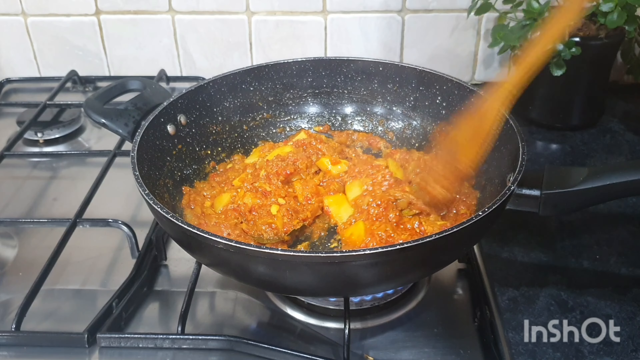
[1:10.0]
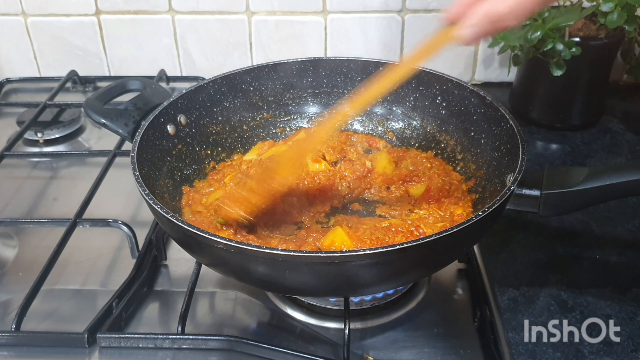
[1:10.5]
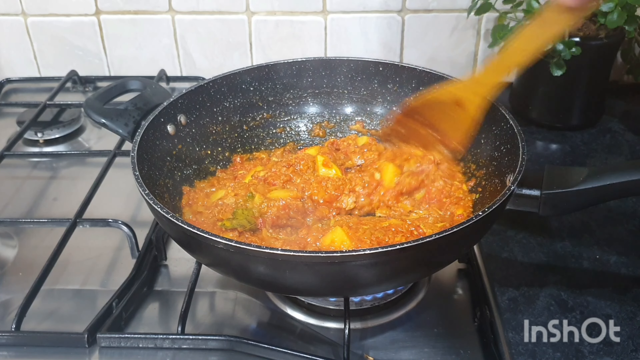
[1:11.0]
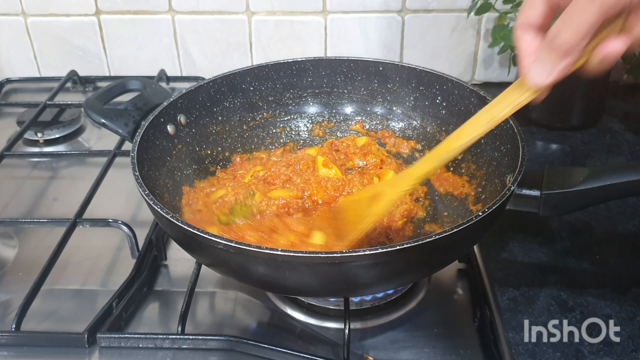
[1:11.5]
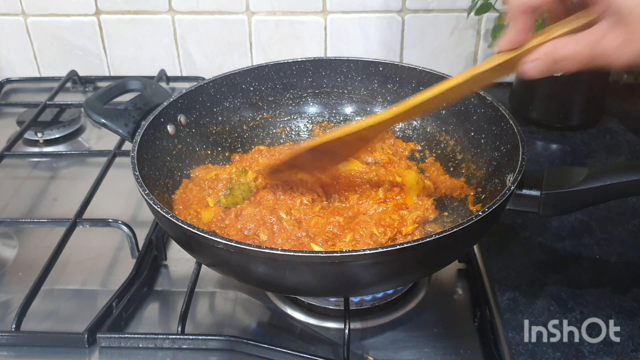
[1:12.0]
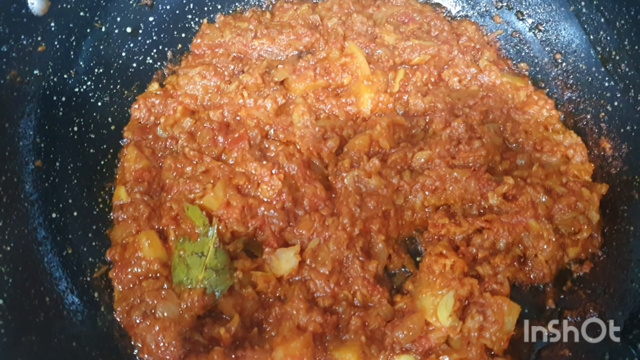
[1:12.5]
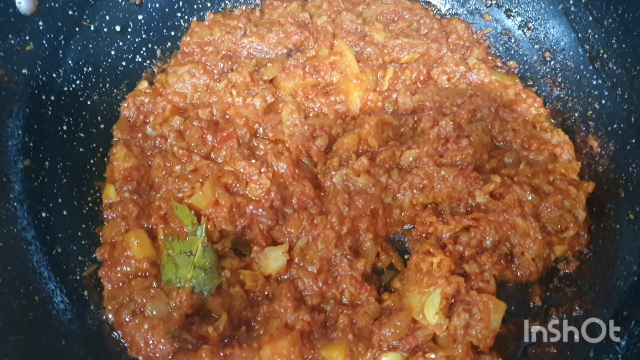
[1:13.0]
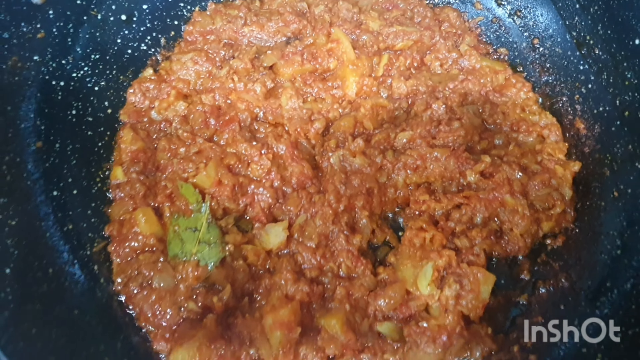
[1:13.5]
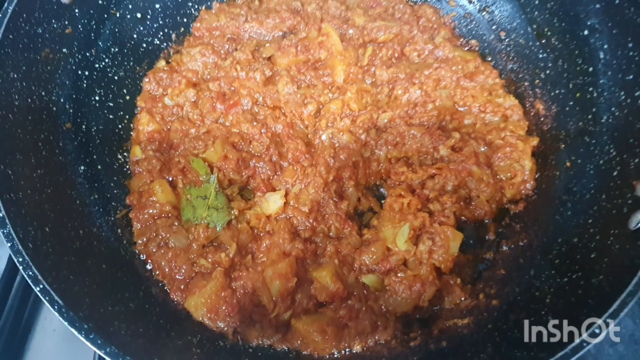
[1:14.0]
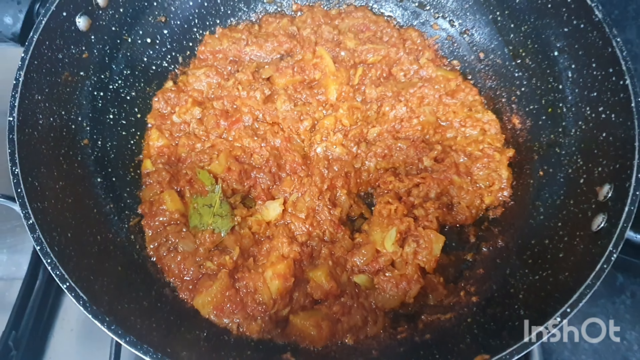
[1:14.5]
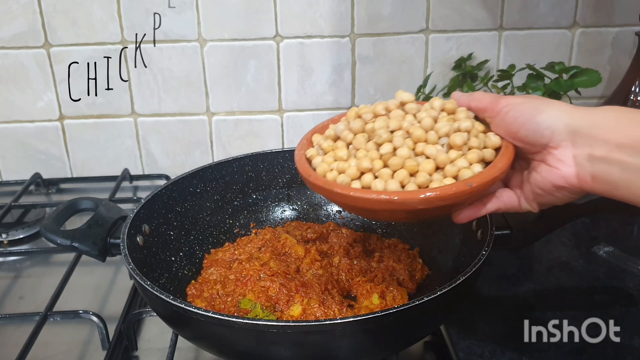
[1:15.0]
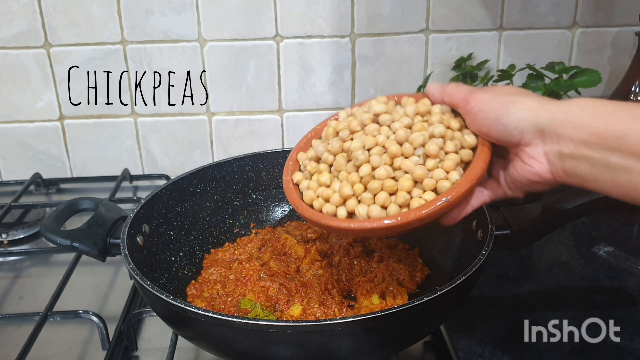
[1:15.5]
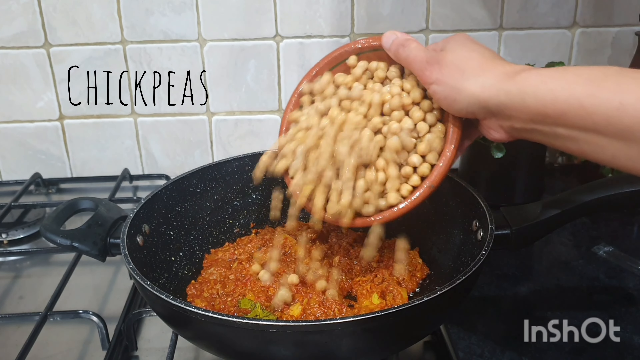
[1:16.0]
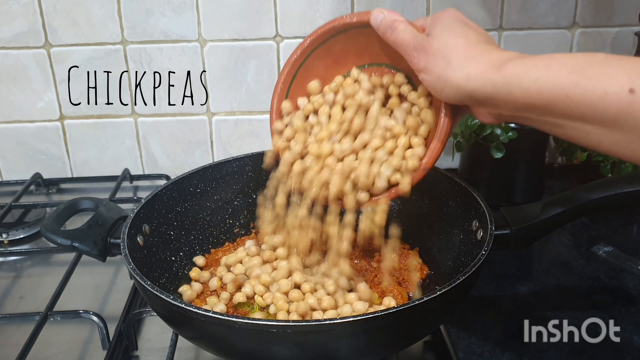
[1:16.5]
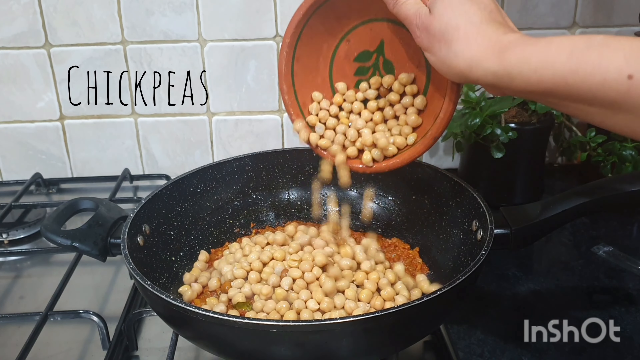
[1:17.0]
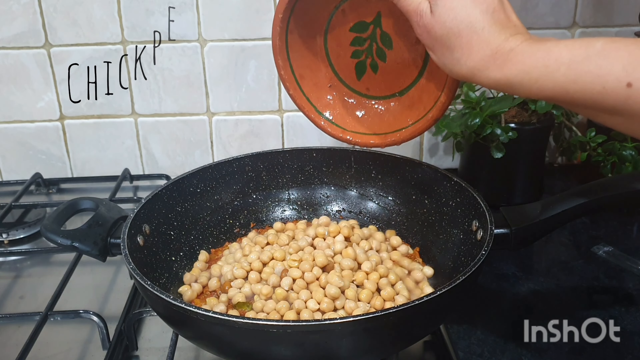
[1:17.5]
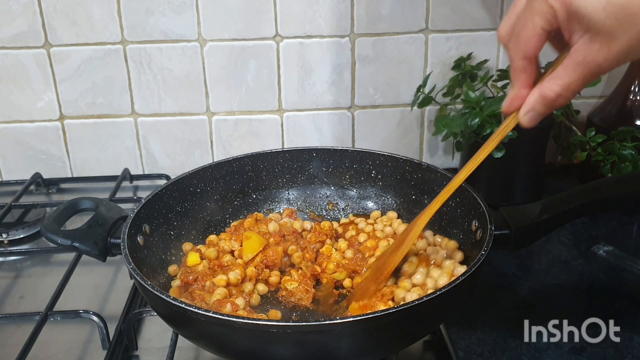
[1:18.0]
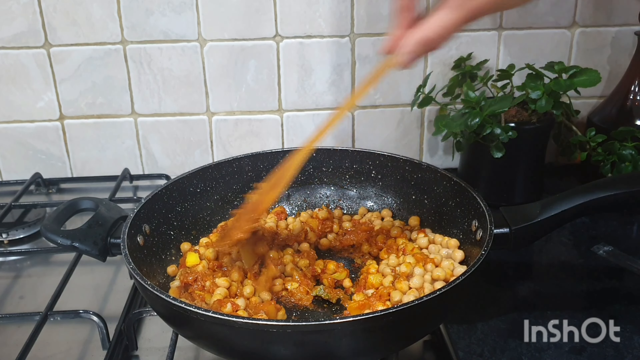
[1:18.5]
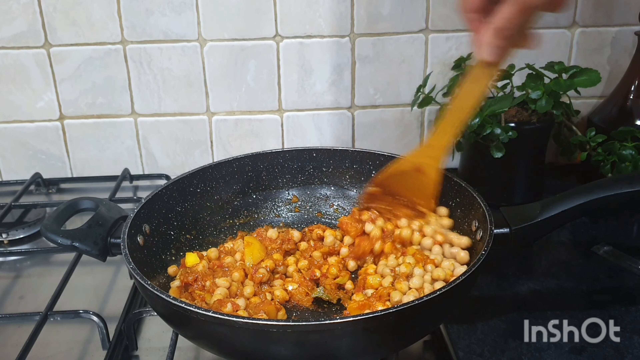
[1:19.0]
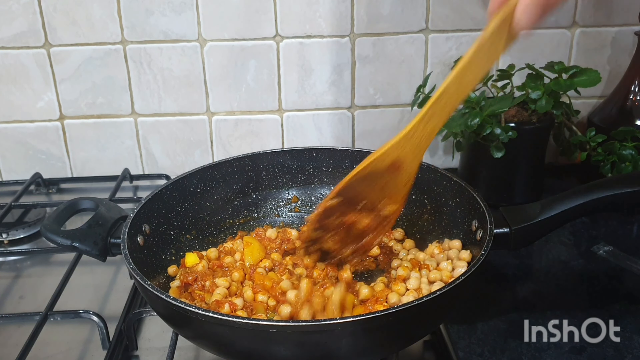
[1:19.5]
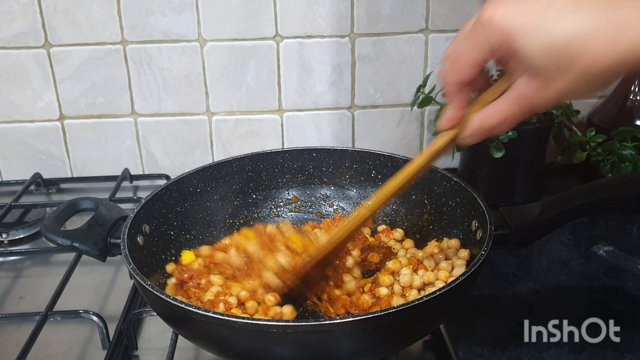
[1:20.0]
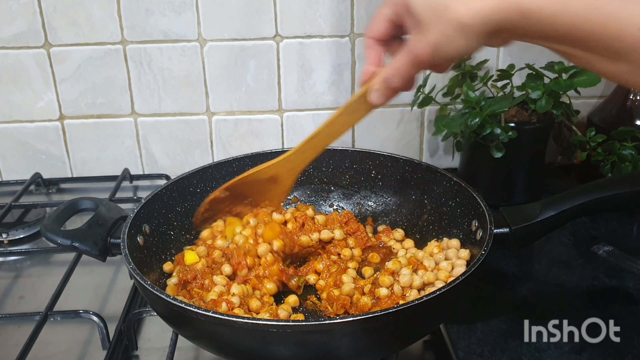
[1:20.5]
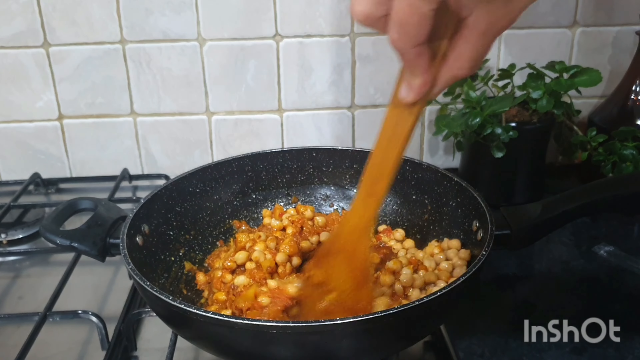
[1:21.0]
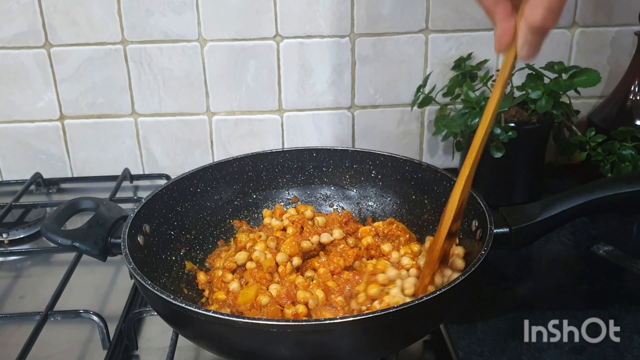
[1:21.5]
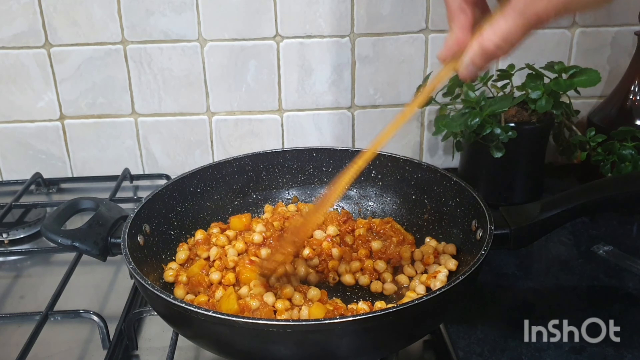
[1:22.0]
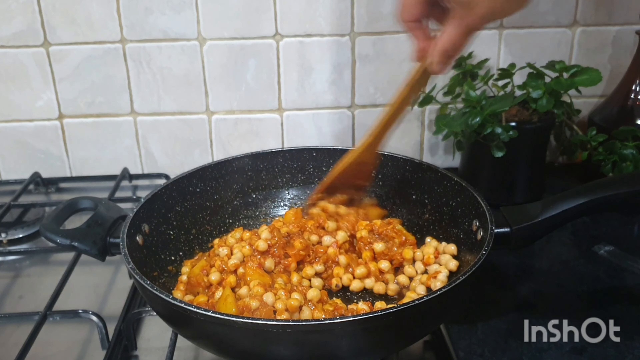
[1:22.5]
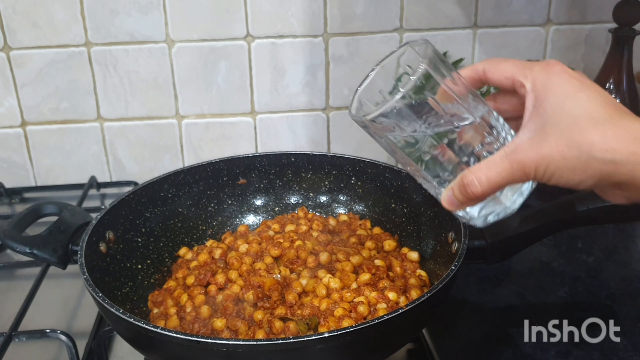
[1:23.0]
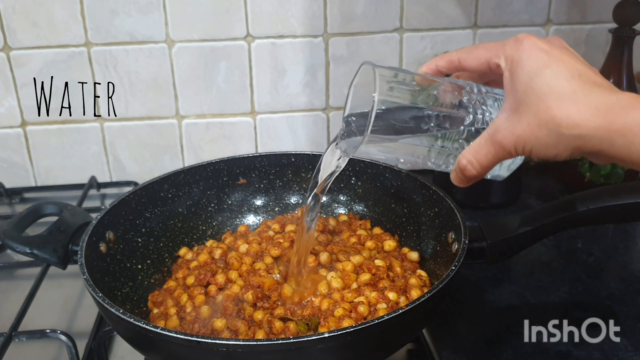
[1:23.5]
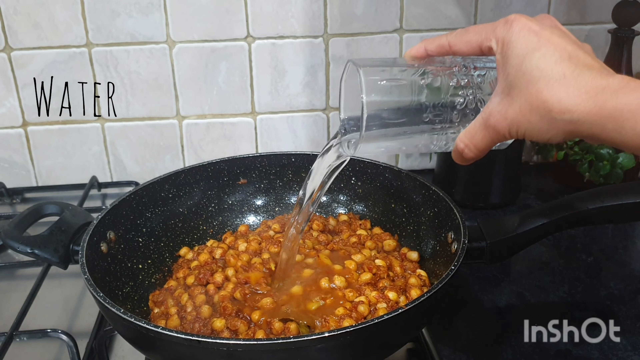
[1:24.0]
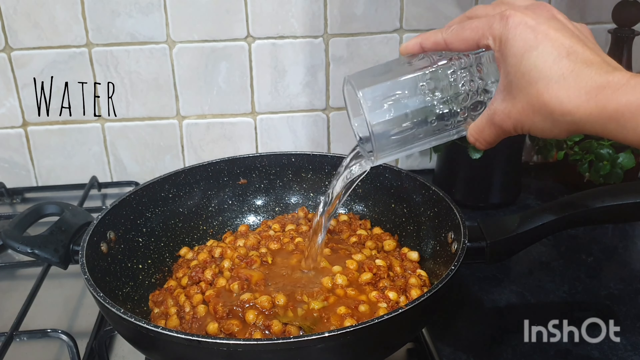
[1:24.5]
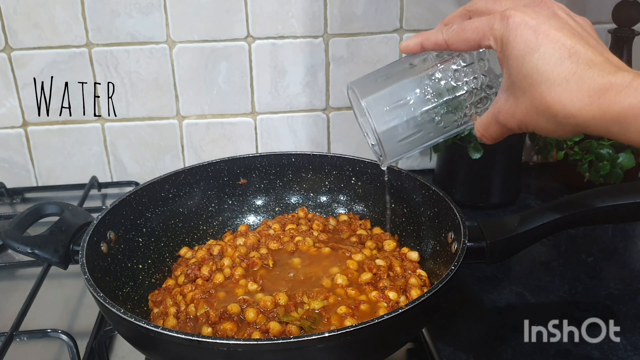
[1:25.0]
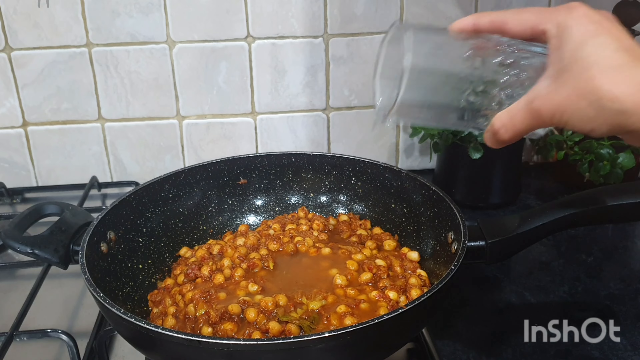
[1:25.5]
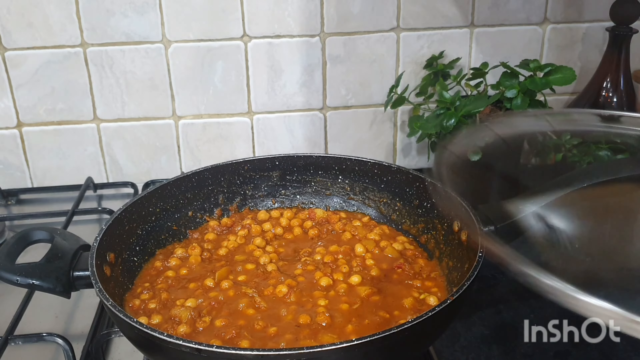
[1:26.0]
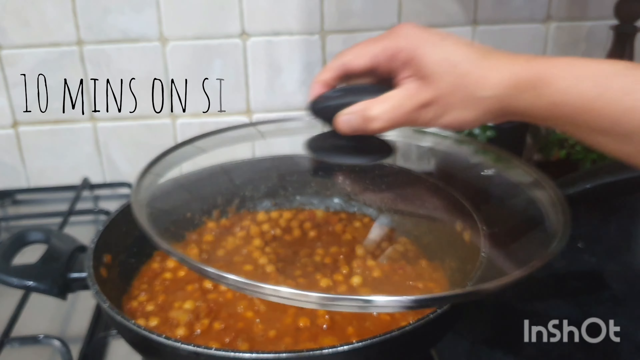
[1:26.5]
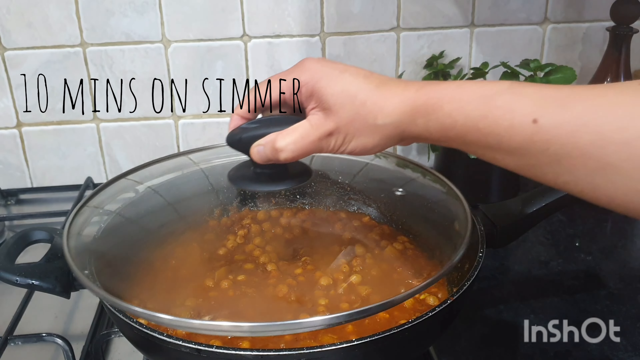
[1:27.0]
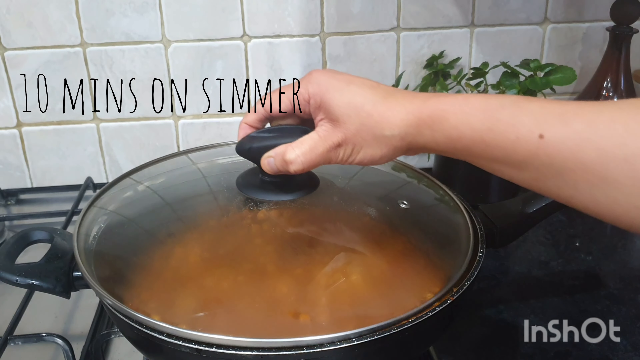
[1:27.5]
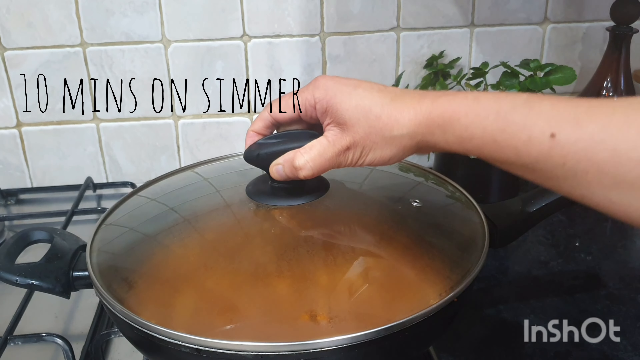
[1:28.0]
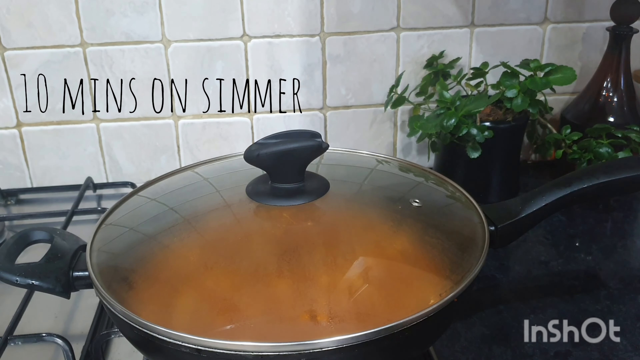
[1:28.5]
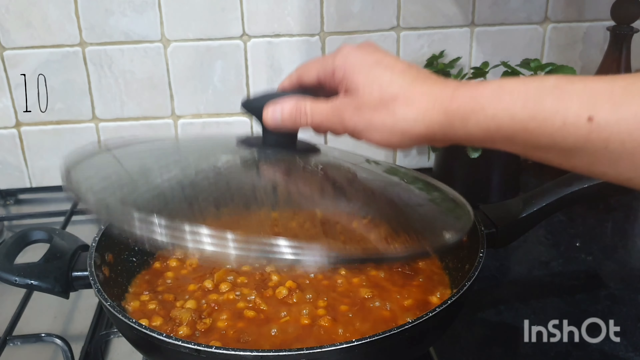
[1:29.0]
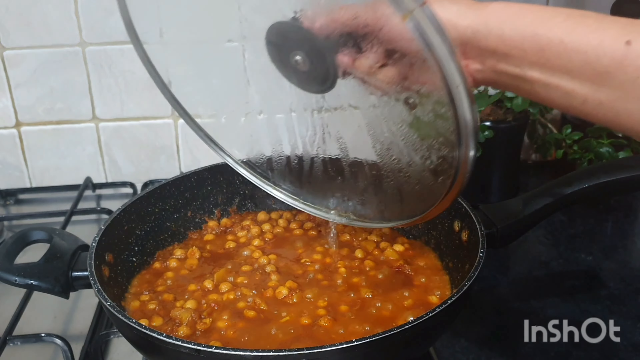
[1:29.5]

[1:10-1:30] The lid is removed and the food is still cooking. There are some green leaves in the pan that have not been named. Cooked chickpeas and some water are put in, and the lid goes on again. The name InShot is displayed on screen. The gas appears to be at a moderate height, and the food cooks gently.